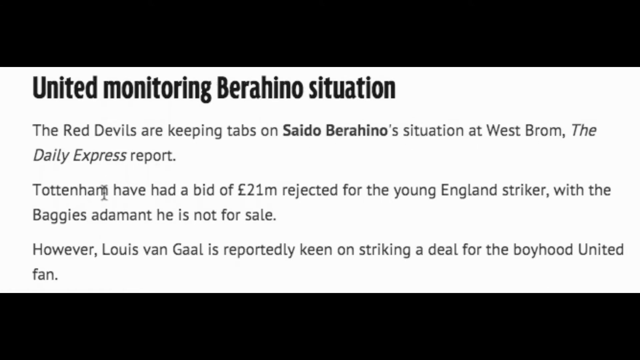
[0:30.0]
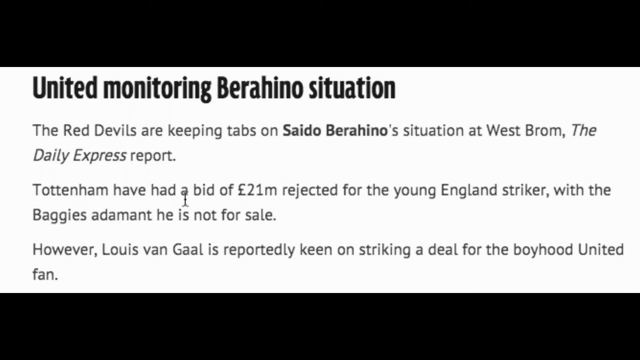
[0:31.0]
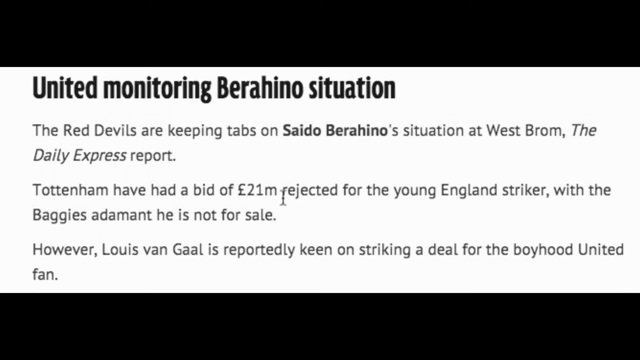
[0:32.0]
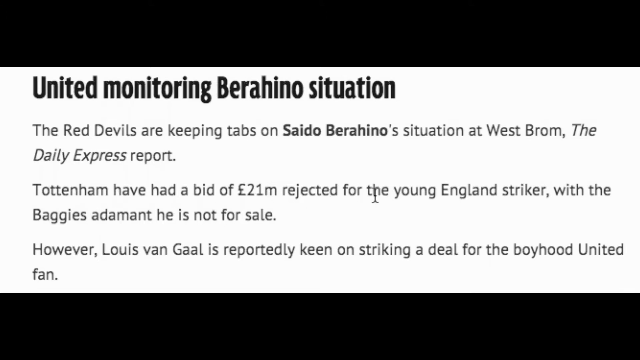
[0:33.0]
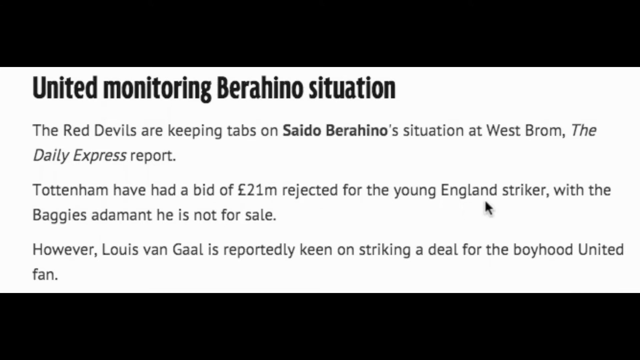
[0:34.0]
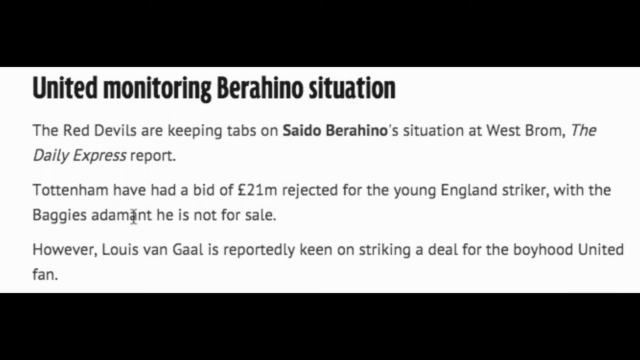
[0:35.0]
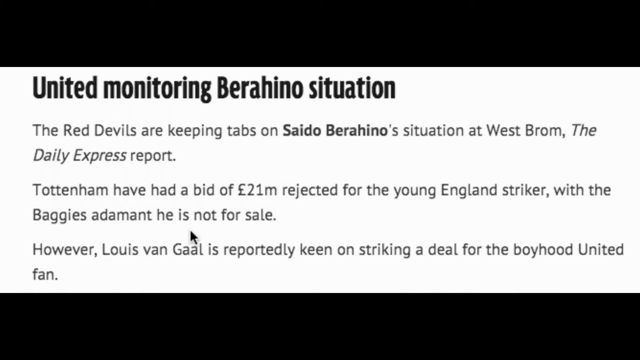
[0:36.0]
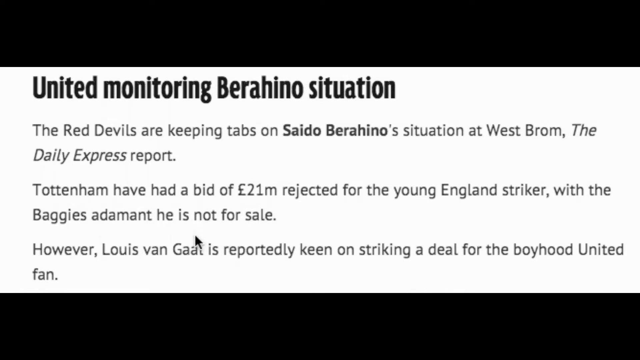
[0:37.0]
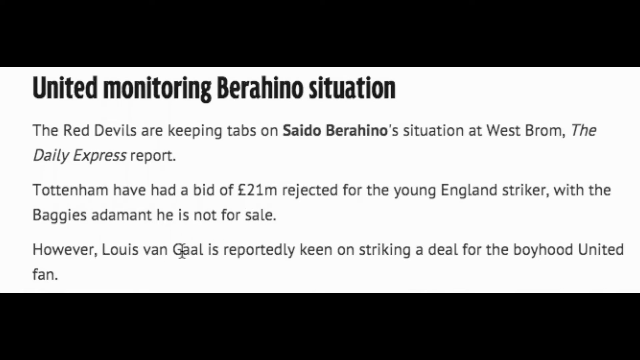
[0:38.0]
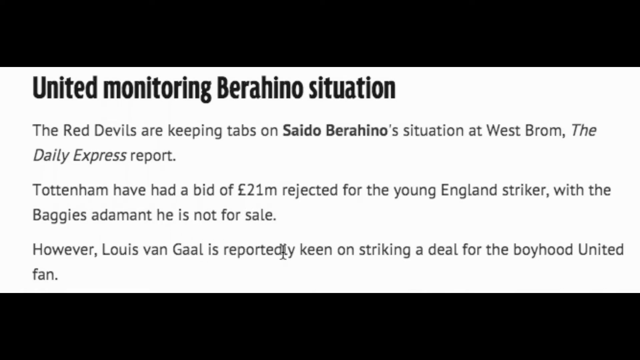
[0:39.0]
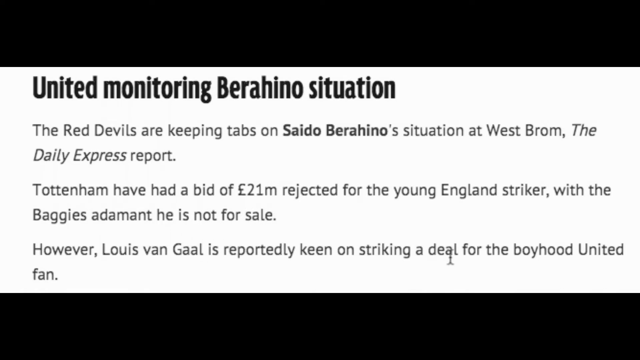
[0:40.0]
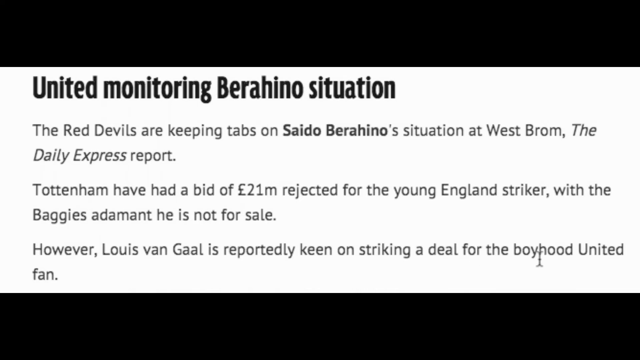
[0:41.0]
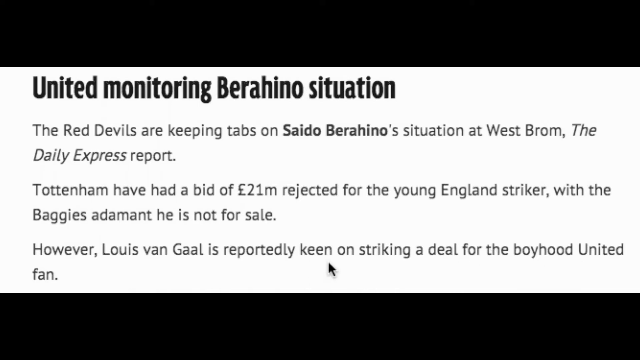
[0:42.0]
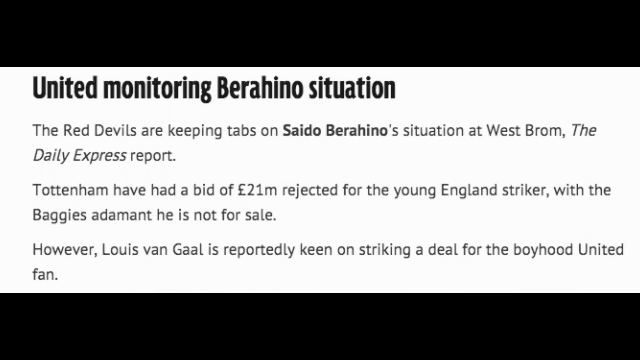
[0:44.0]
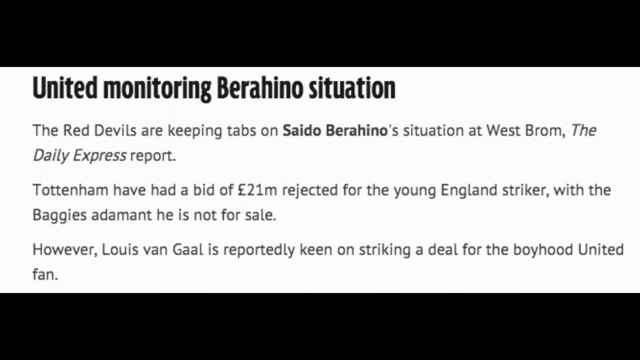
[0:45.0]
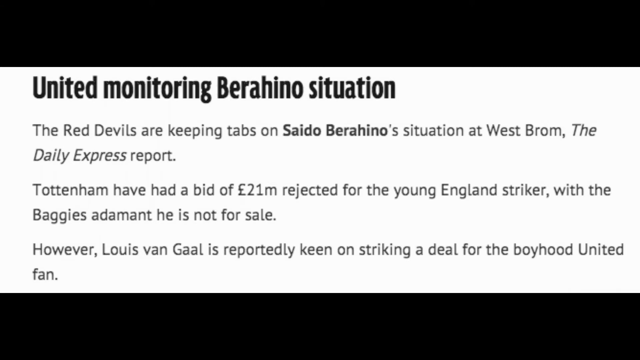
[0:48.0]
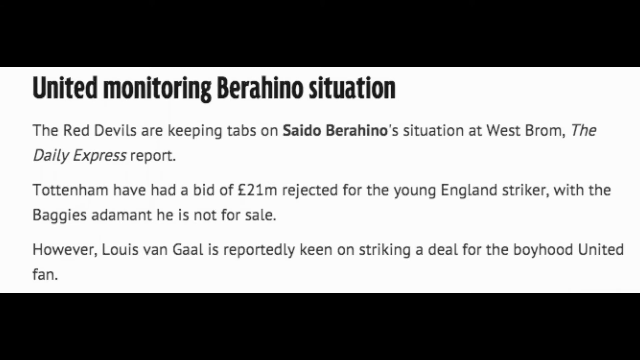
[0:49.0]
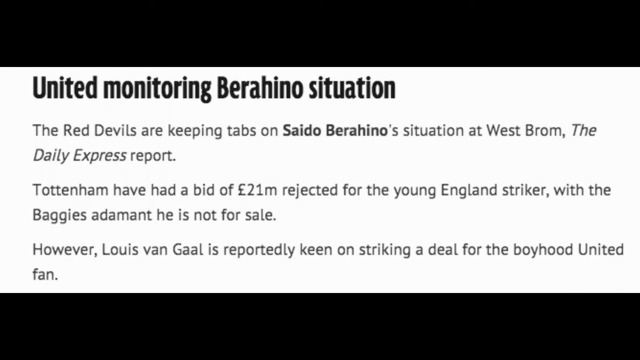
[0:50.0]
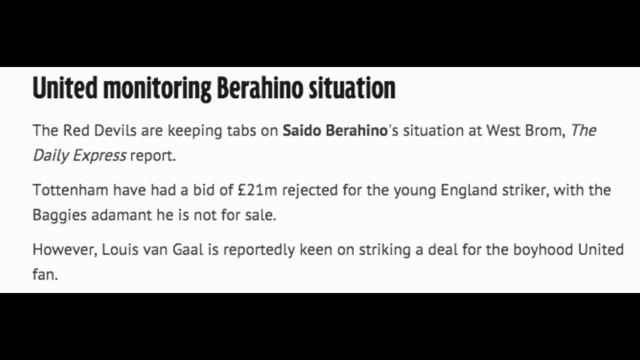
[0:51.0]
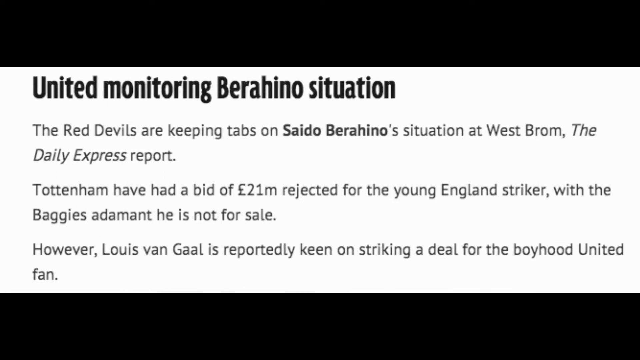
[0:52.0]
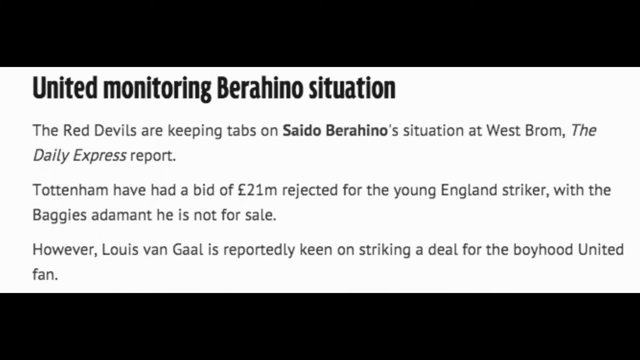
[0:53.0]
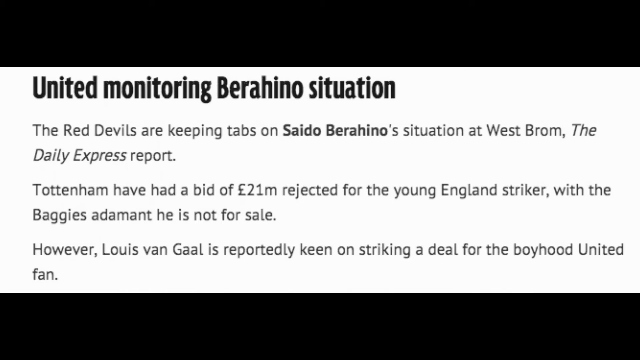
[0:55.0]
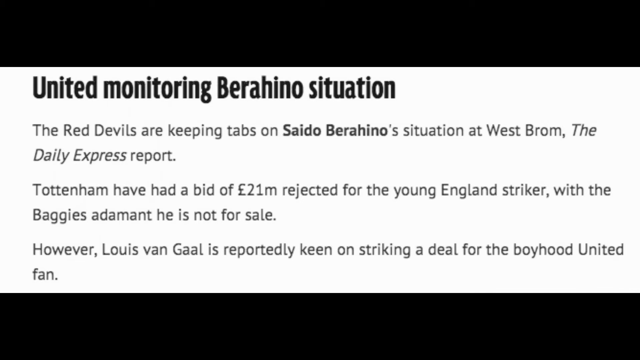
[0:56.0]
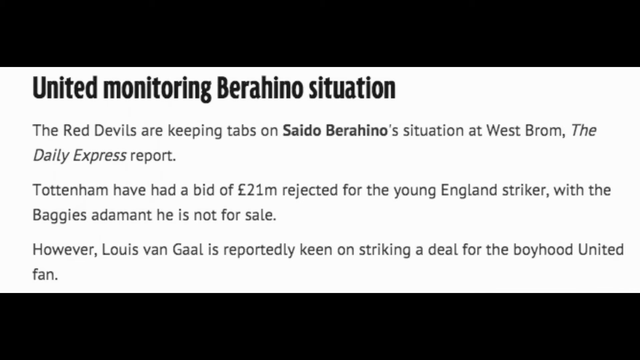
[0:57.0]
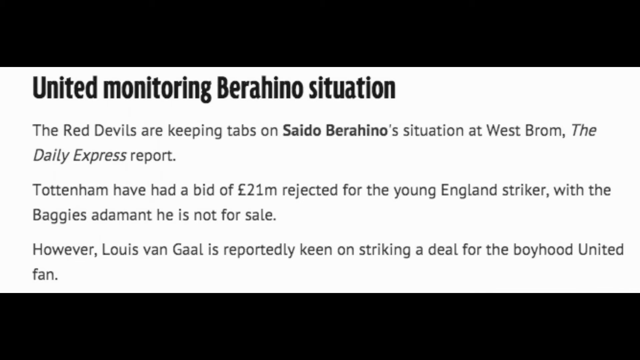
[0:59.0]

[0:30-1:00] A title and a series of sentences appear in black text at the center of a white background, with a black bar at the top and bottom. At the center left, bold black text reads "United Monitoring Barihino Situation." Beneath it are three sentences. The first reads "The Red Devils are keeping tabs on Saito Barihino Situation at West Brom, The Daily Express Report," with "Saito Barihino" in bold. The second reads "Tottenham have a bid of 21 million pounds rejected for the young England striker, with the Baggies adamant he is not for sale." The third reads "However, Louis van Gaal is reportedly keen on striking a deal for the boyhood United fan." A mouse cursor in the middle sentence bounces left to right along each word, as if the person moving it is reading word by word. It moves from the middle sentence down to the bottom sentence and keeps bouncing along the words. The cursor then moves toward the right side of the screen and fully off the right edge as the scene lingers on the text.